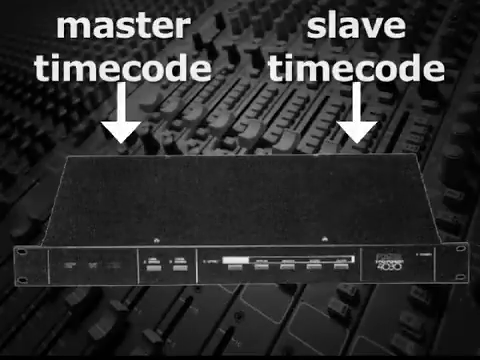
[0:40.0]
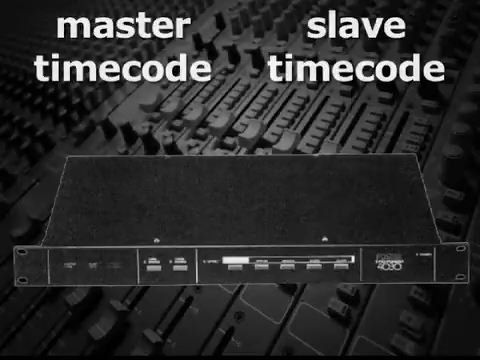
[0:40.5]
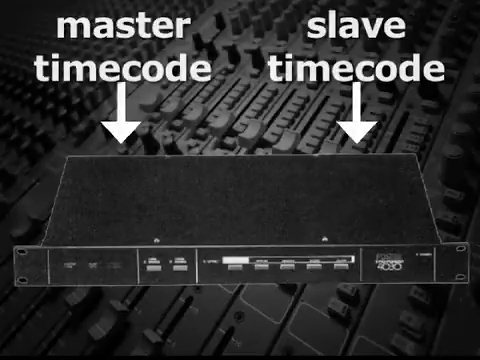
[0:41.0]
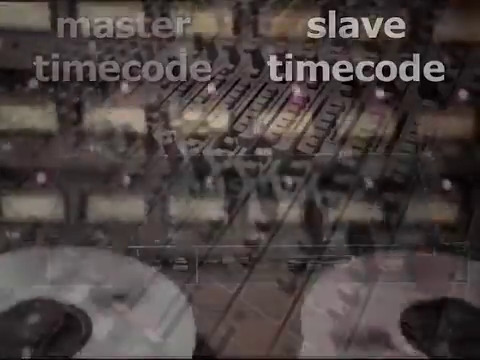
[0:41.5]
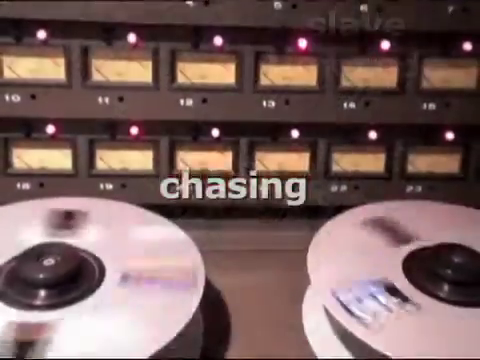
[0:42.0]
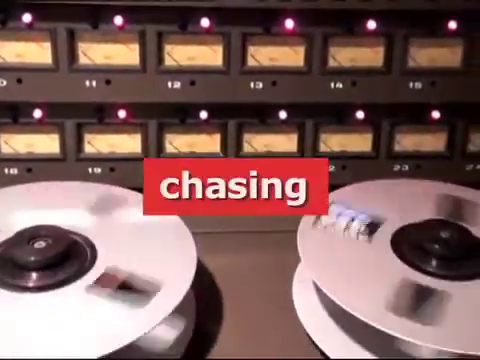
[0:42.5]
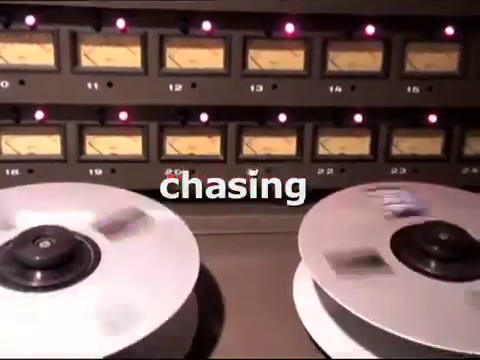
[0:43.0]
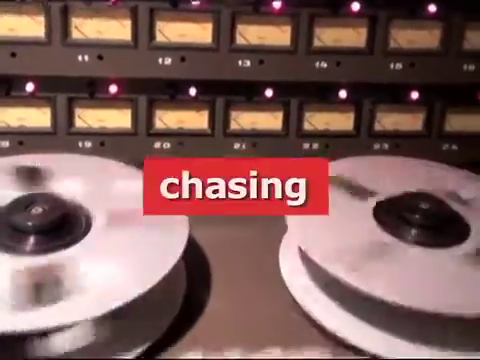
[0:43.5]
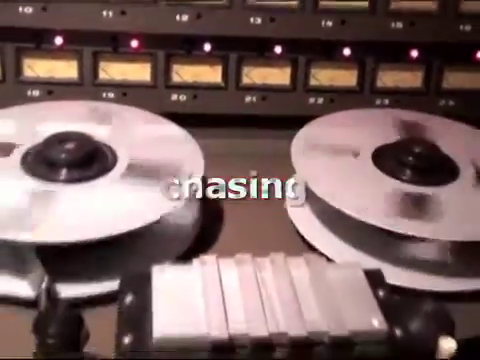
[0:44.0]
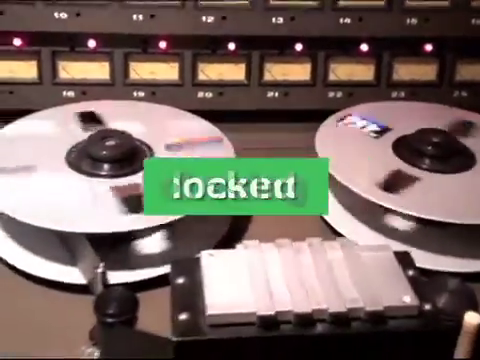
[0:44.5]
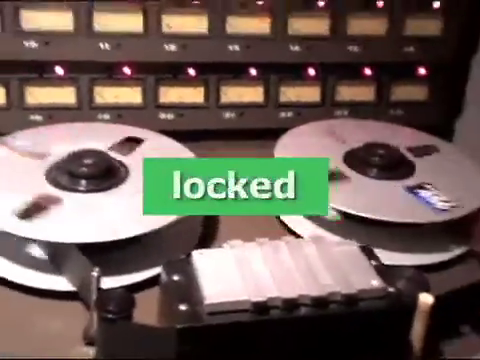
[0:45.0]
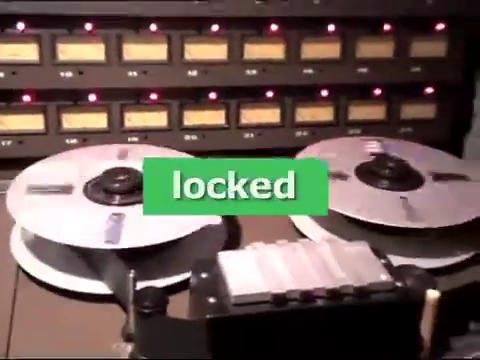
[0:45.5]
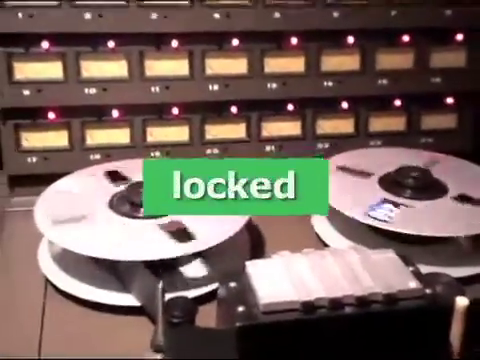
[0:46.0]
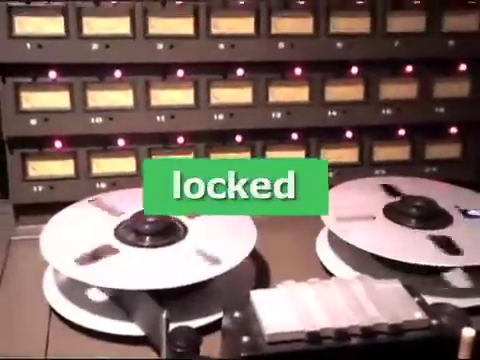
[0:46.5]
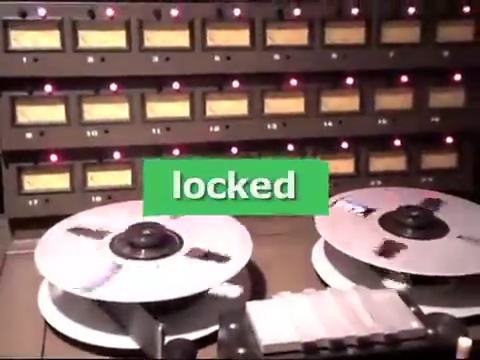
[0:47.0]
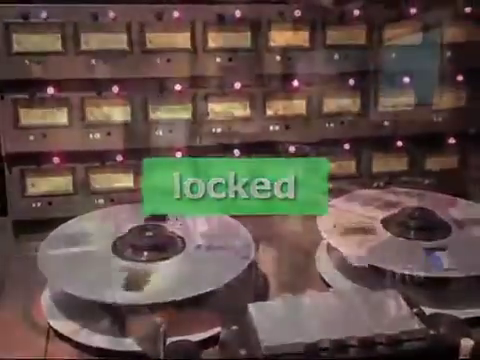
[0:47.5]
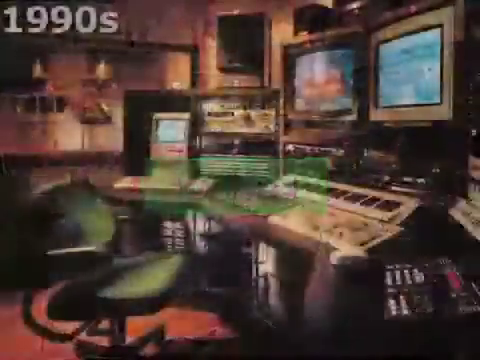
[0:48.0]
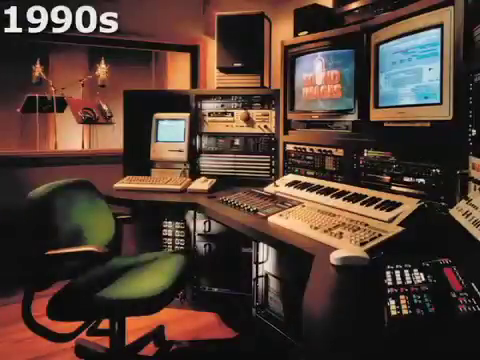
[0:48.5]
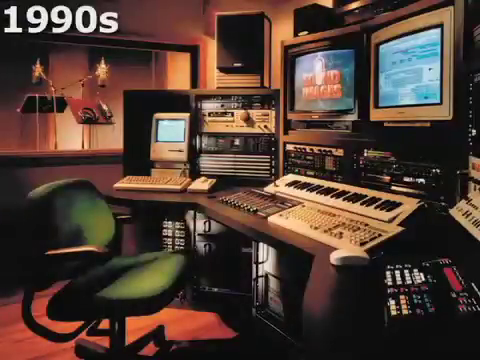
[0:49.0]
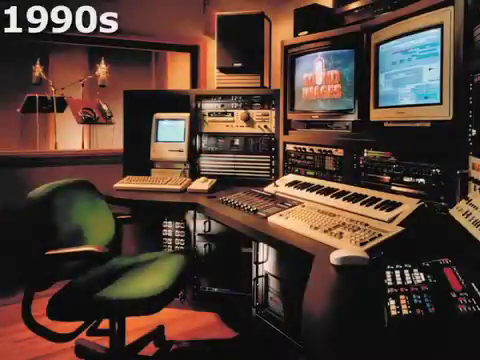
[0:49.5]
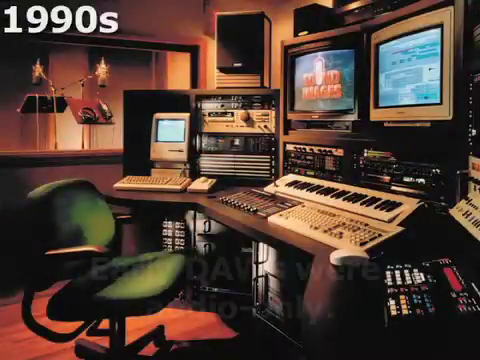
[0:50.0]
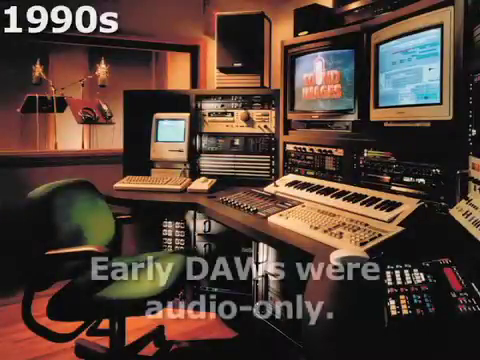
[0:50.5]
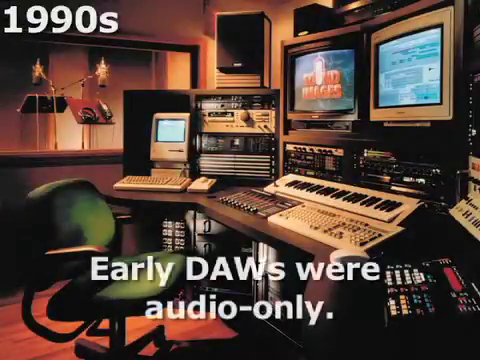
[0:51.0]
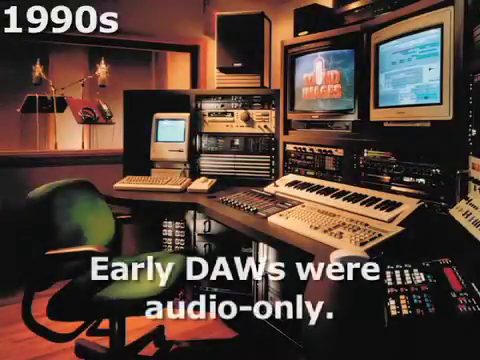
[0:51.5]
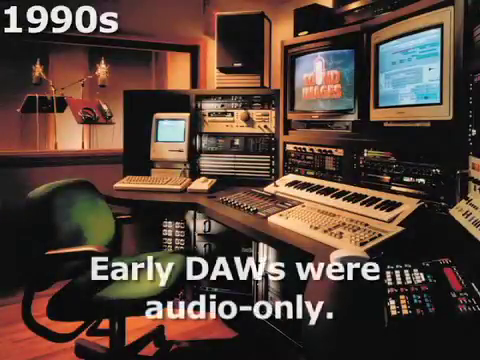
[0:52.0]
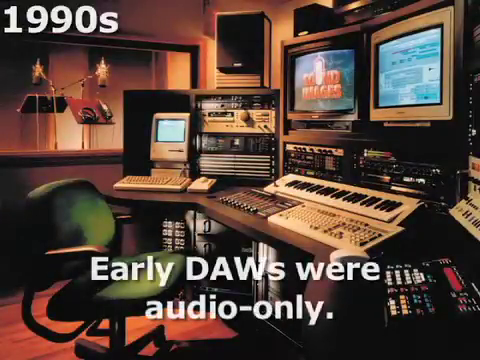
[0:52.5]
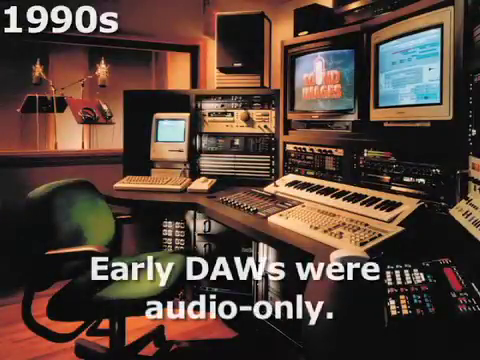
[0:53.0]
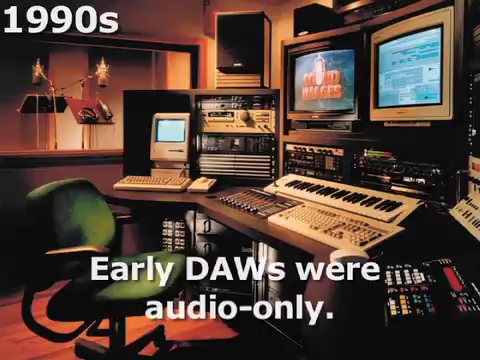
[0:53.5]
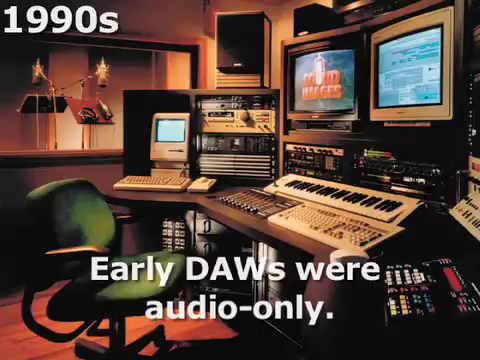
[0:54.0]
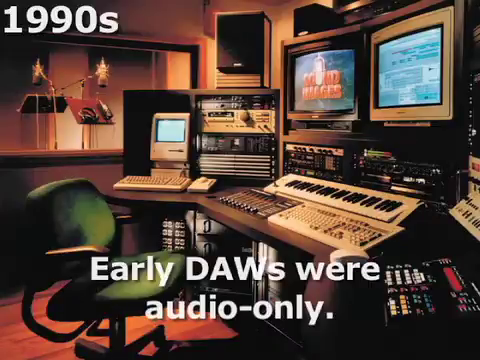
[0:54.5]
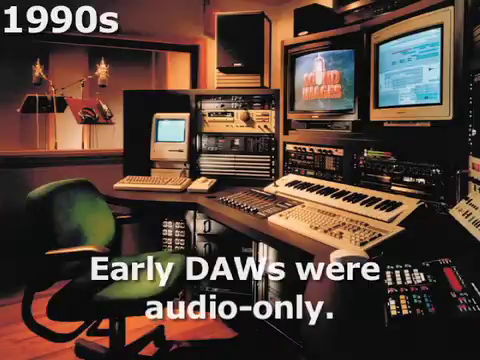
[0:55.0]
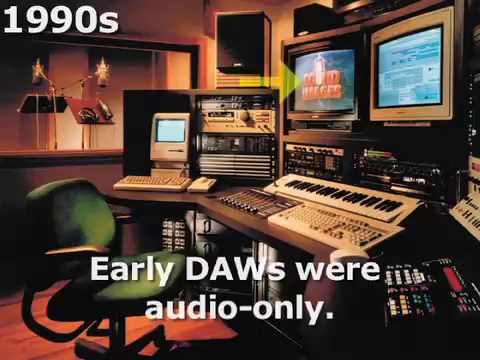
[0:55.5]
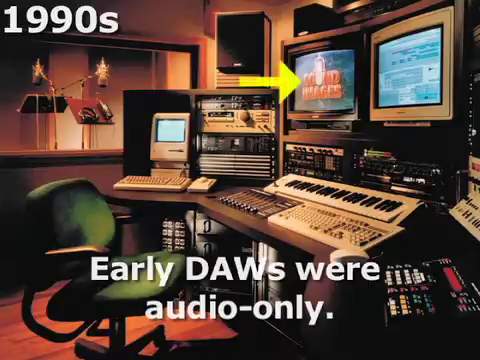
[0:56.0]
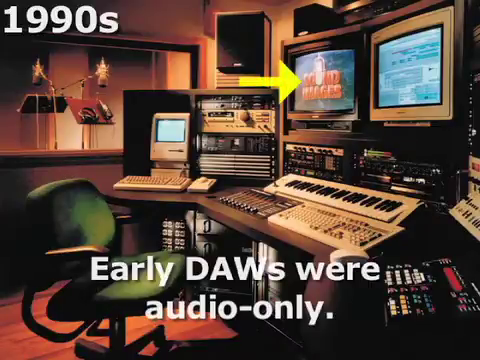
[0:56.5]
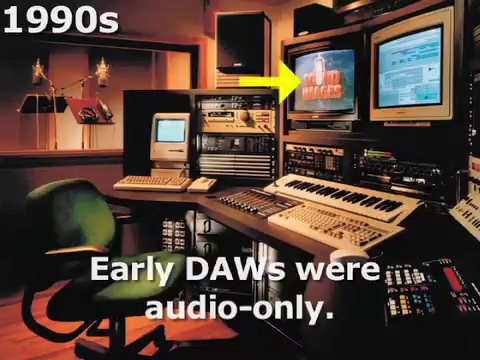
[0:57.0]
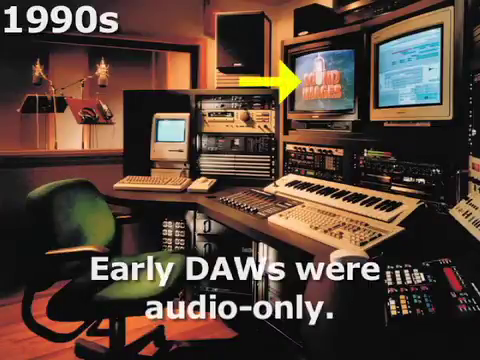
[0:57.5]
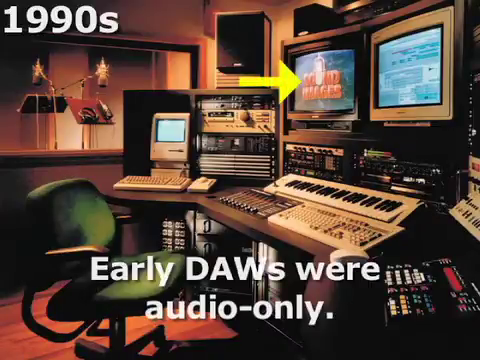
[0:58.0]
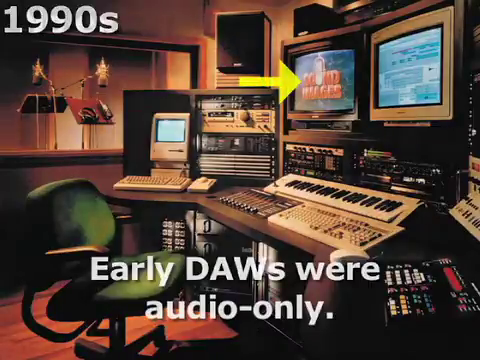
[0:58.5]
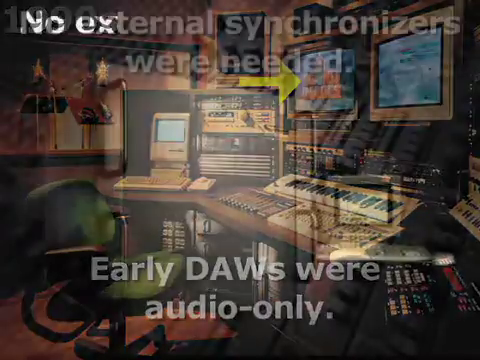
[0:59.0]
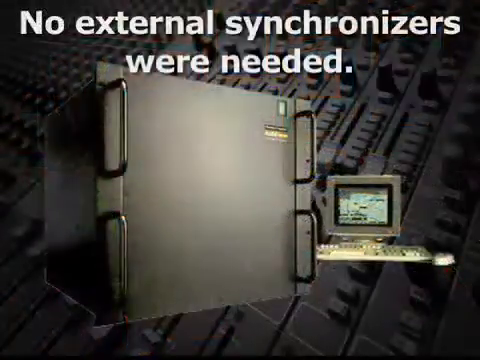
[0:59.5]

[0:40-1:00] The master timecode screen has flashing arrows, and the whole screen sort of fades out until what looks like two reel-to-reel players appear with the word "chasing" on a flashing red background behind them; the reels are moving. Another version follows that is "locked". A screen then reads "1990s" and shows a more traditional studio setup: a desk with monitors, keyboards and a piano keyboard, with what looks like a studio with mics in the background. Text reads "early DAWs for audio only". A yellow arrow appears pointing towards one of the monitors, and finally text flashes up on the screen: "no external synchronisers were required".